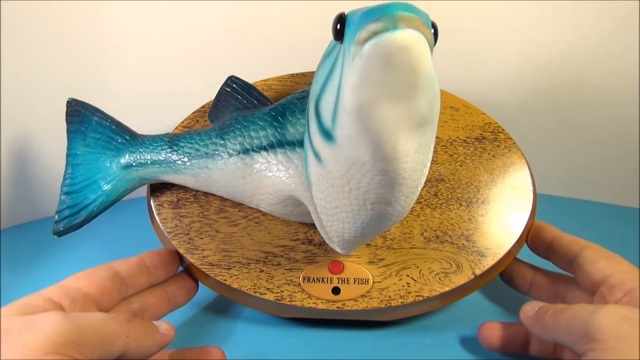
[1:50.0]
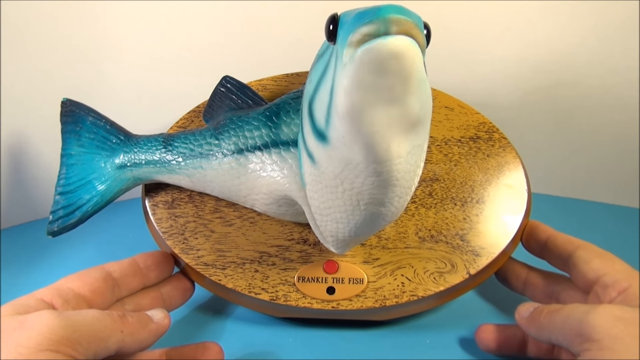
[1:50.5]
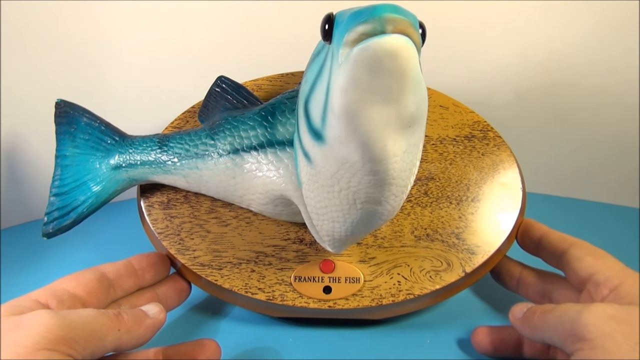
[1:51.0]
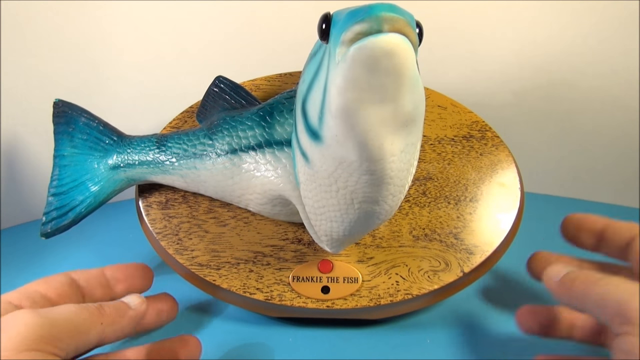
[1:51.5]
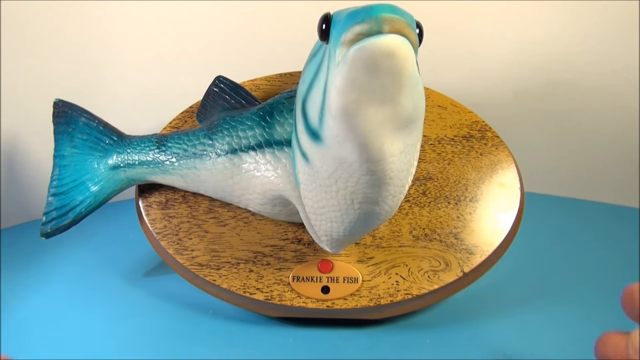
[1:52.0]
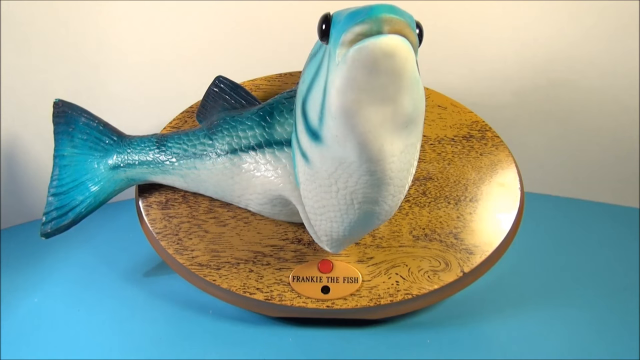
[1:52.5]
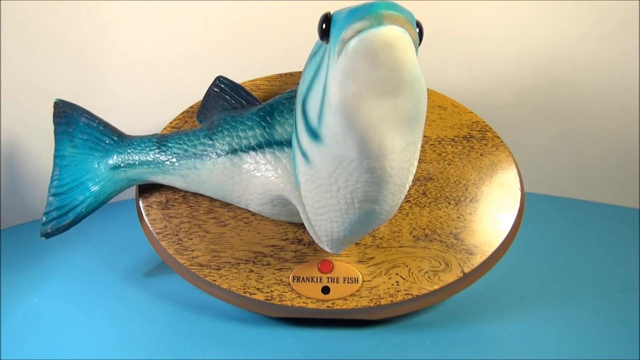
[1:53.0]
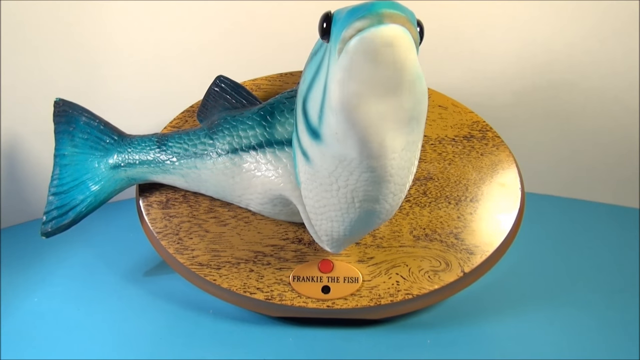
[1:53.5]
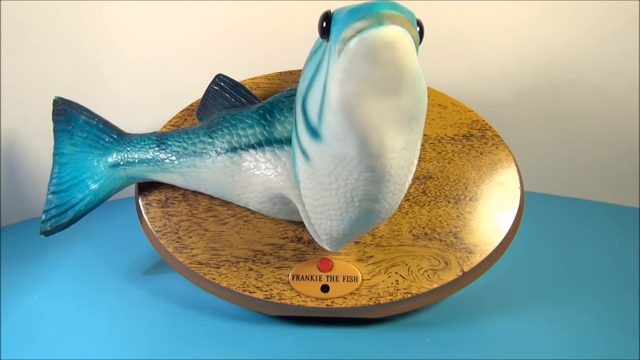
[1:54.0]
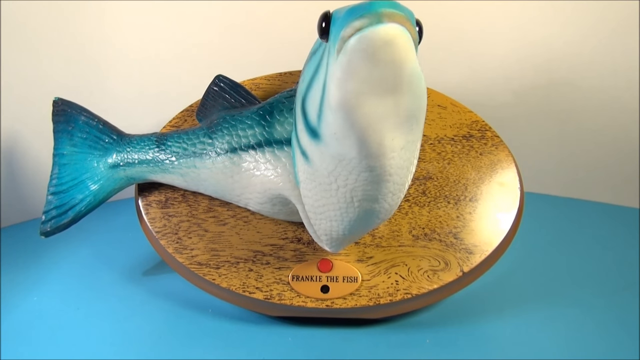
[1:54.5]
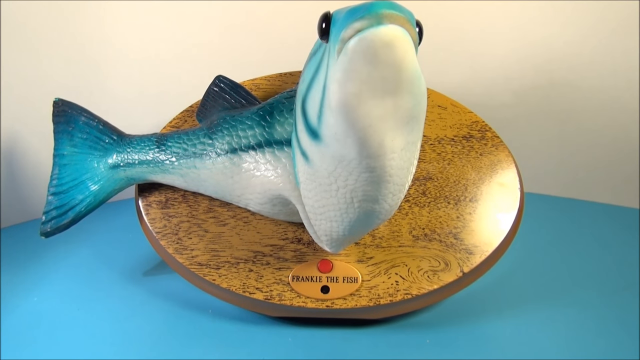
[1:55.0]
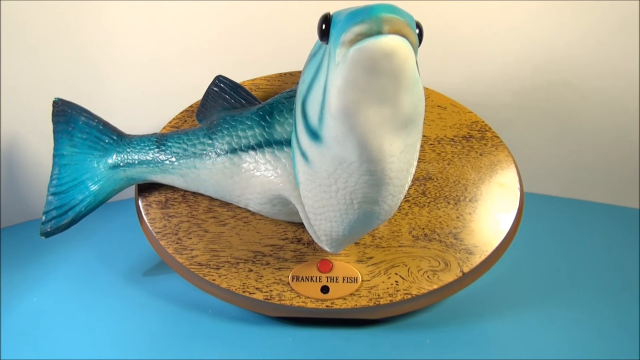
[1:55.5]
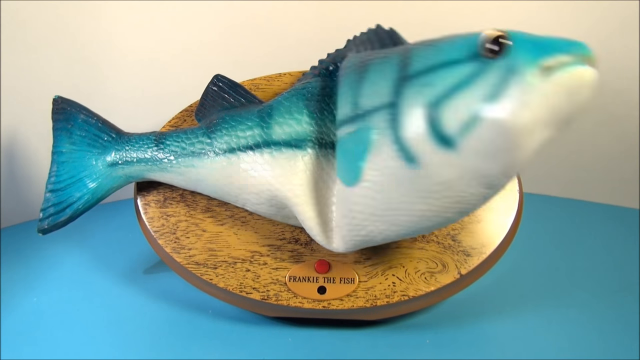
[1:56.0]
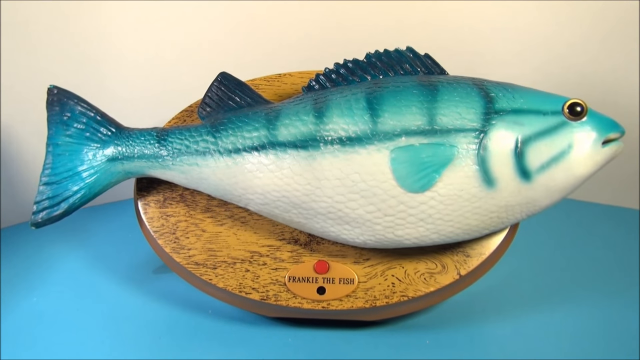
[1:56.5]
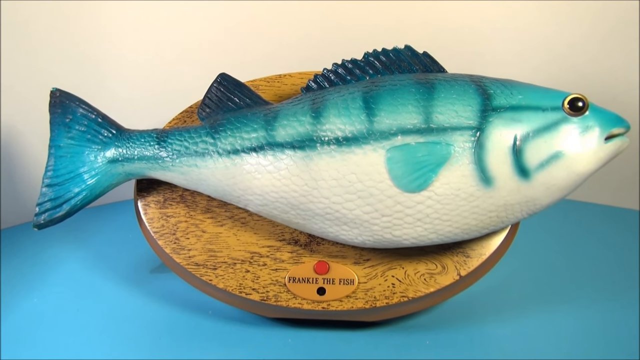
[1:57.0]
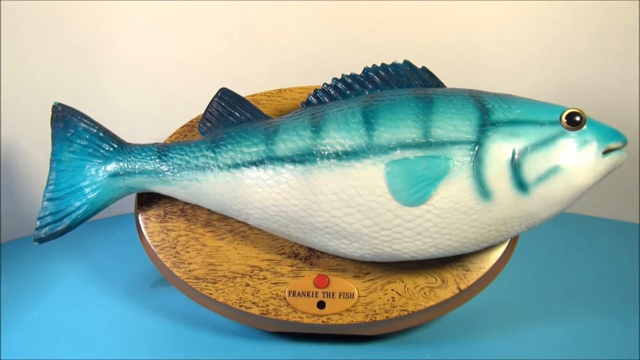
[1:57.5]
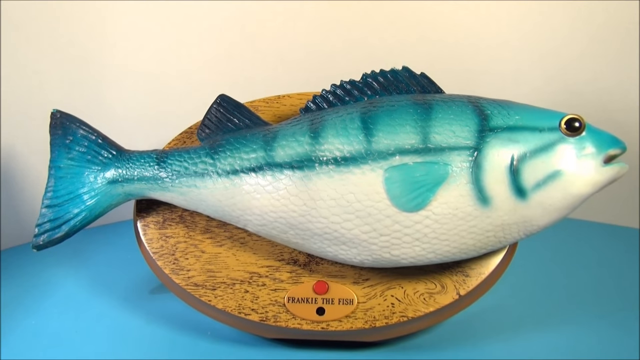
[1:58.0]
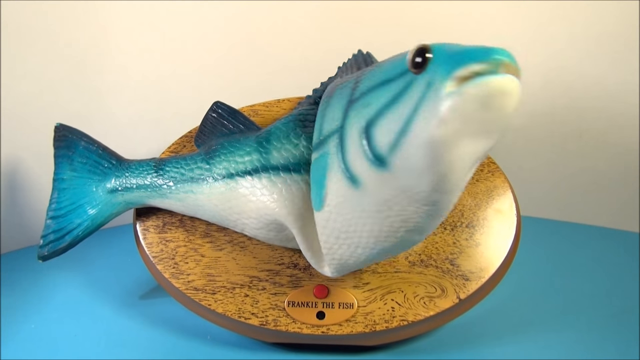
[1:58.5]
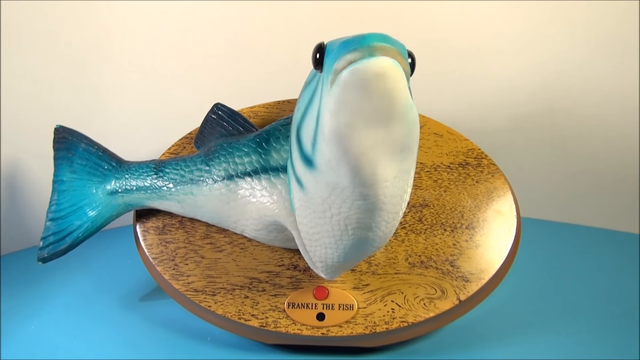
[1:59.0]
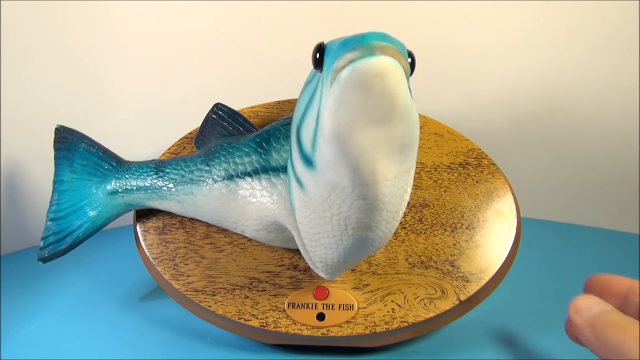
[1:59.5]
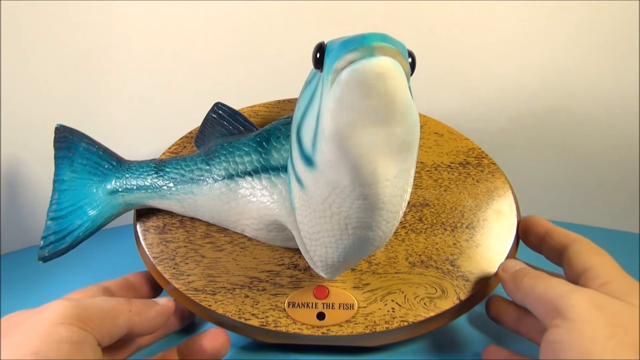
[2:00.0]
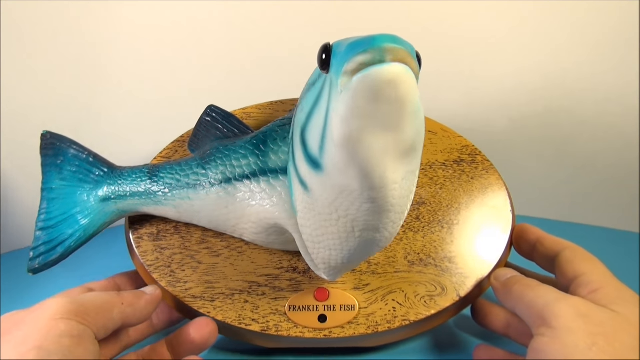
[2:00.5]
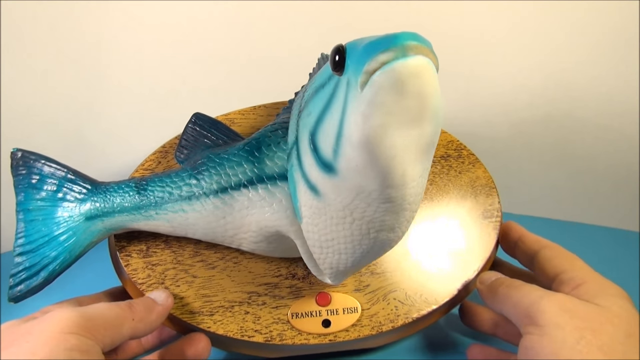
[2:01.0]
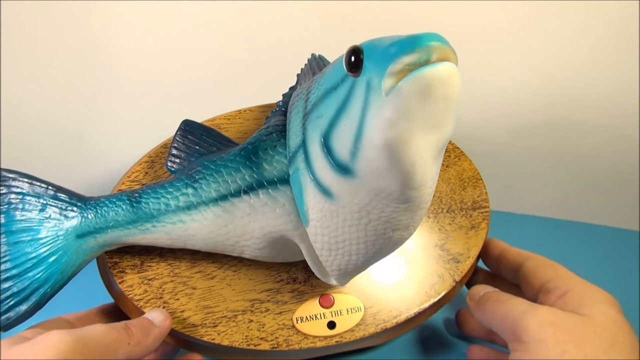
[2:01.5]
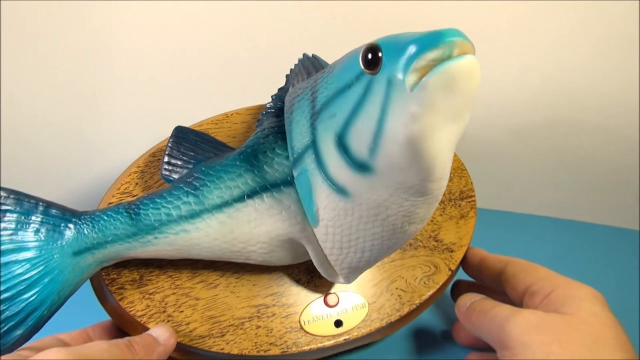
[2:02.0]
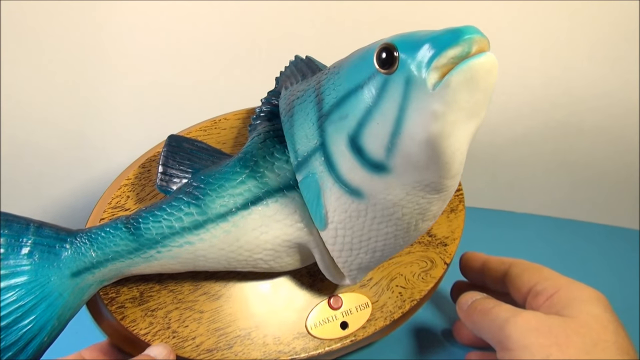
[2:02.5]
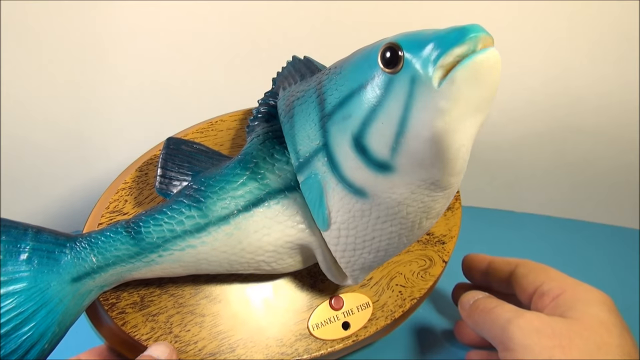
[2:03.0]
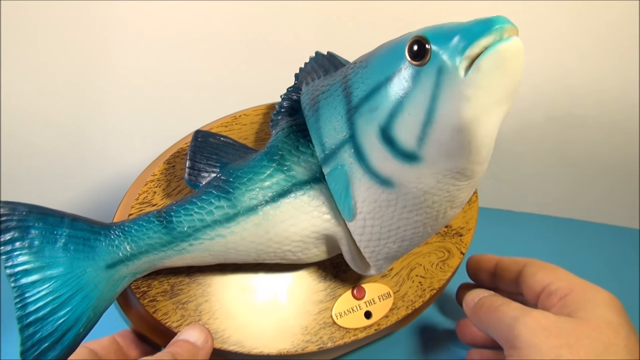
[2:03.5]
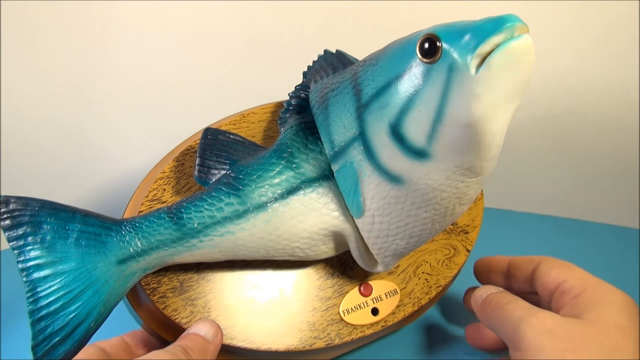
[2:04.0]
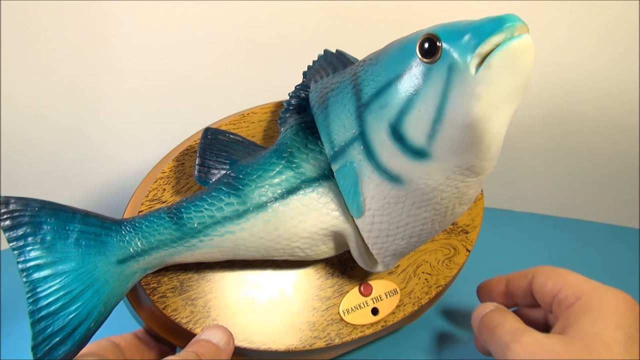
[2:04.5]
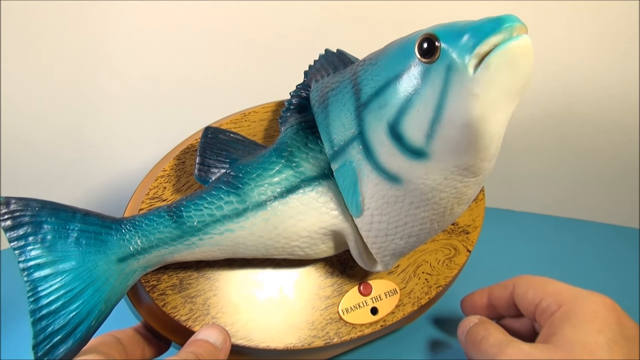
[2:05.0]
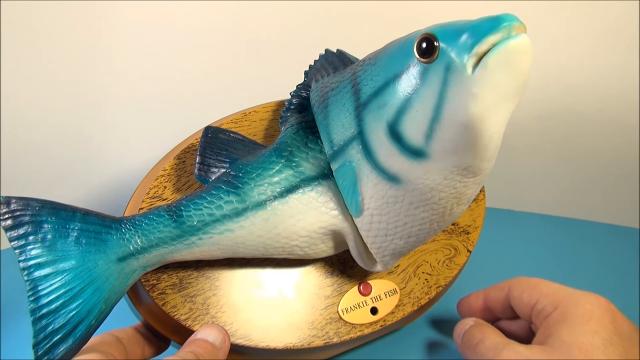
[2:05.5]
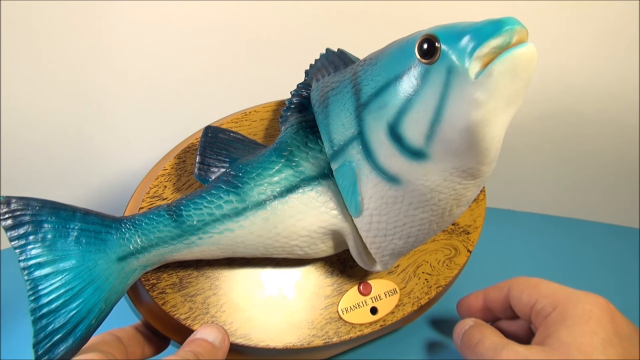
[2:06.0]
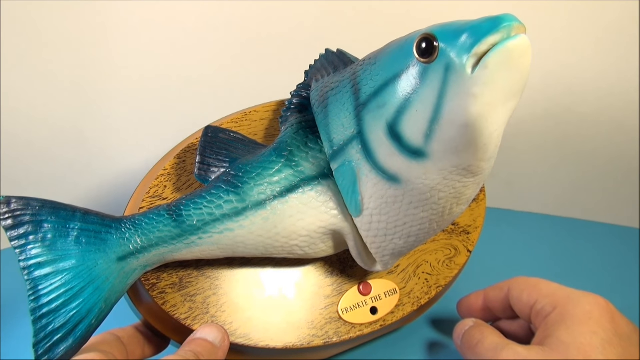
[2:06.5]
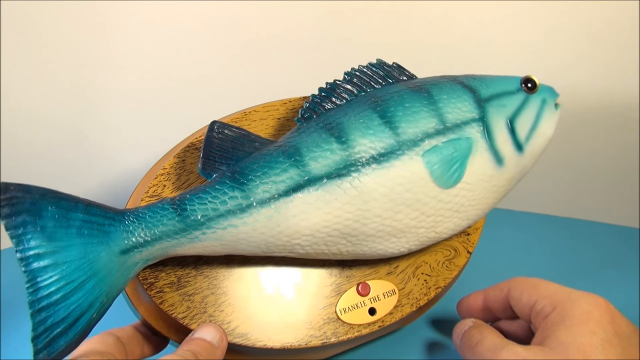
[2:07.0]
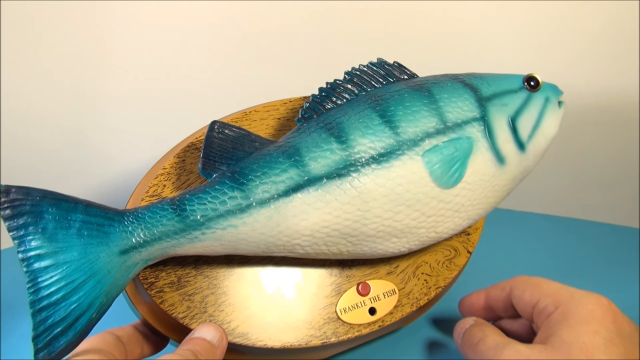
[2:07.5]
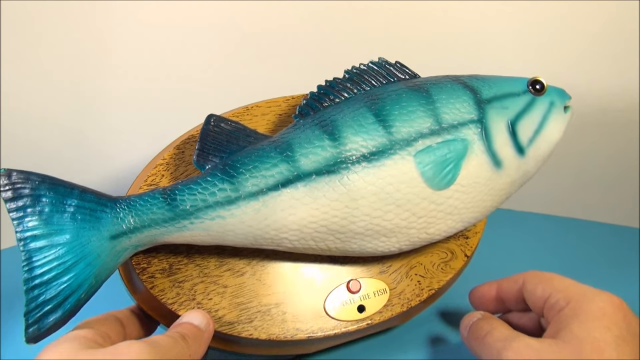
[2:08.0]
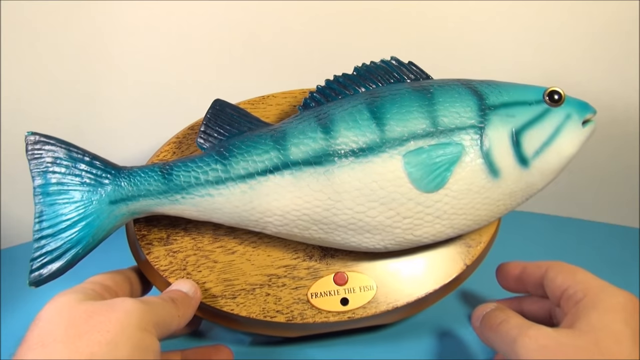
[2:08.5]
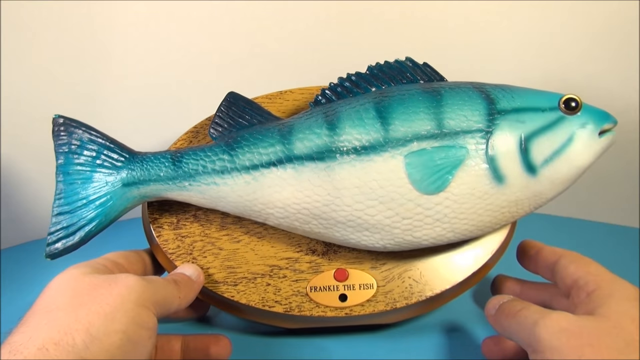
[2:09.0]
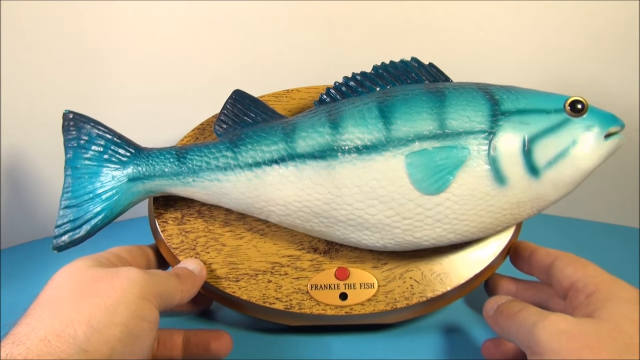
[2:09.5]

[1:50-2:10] The fish sits on the table at an angle, held in place by the bracket on the back of the mounting plate, and sings on repeat: its head turns 90 degrees, it sings, goes flat, pauses slightly, then turns and sings again before going flat. Even when flat, its mouth moves slightly, as if saying something very short. At one point the person's hands hold the toy at the base and turn it slightly. Glare from the room's light source reflects off the base the fish is attached to.